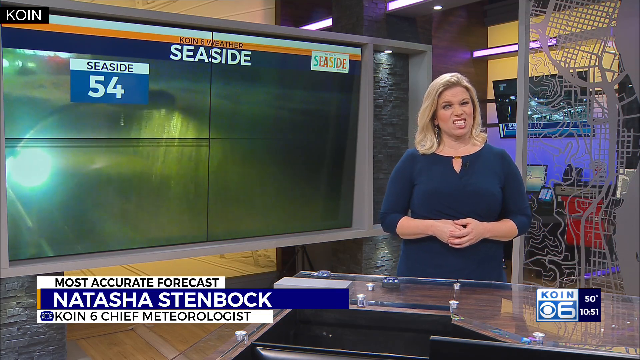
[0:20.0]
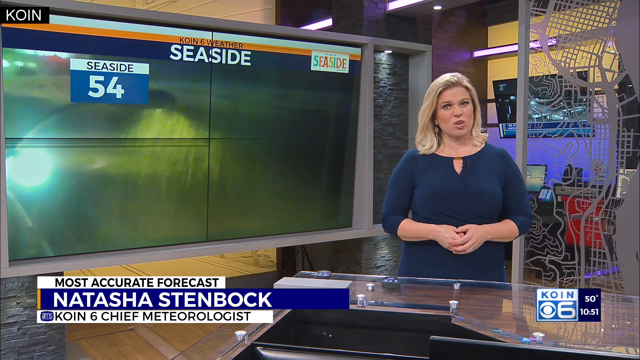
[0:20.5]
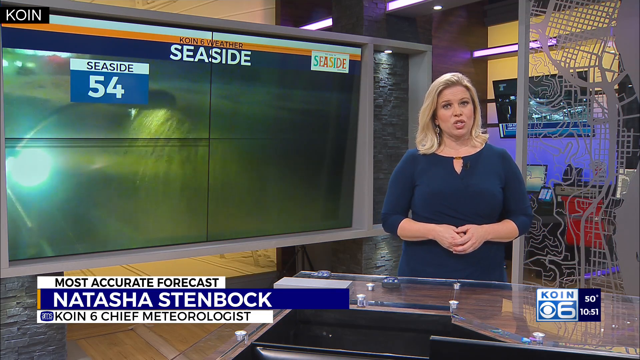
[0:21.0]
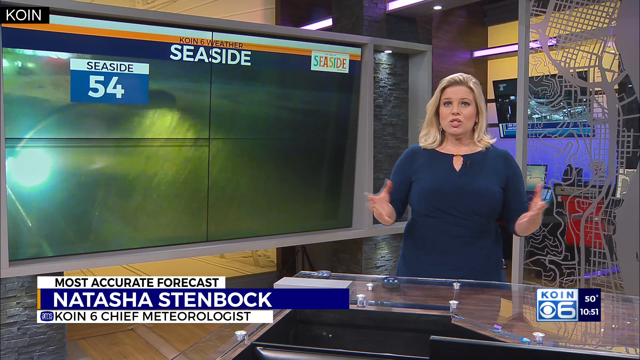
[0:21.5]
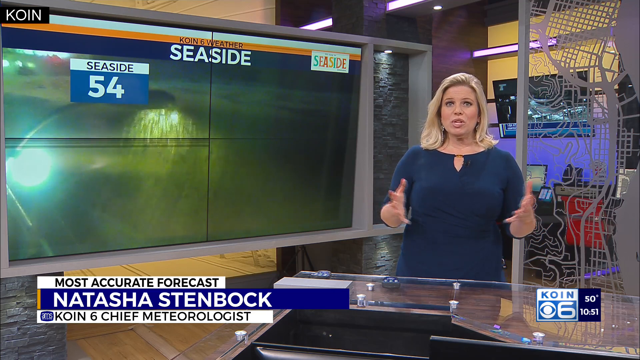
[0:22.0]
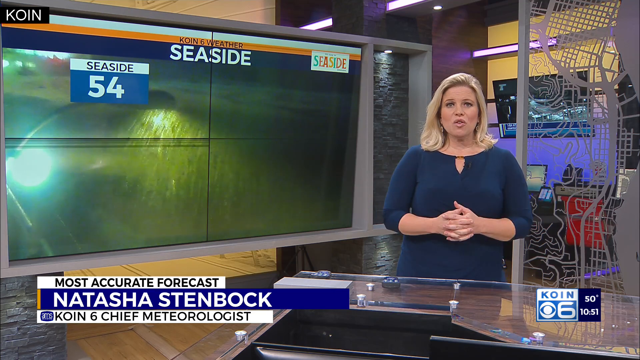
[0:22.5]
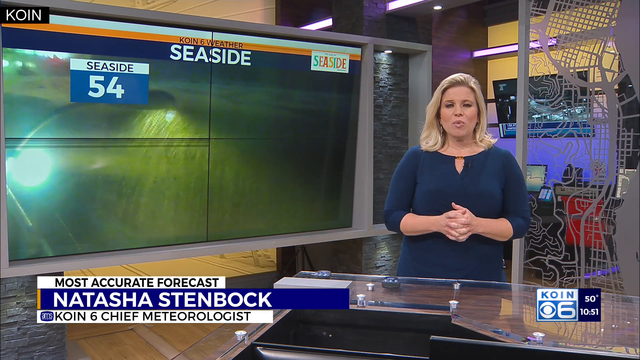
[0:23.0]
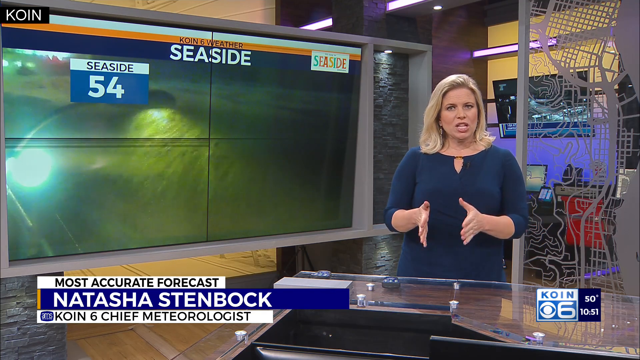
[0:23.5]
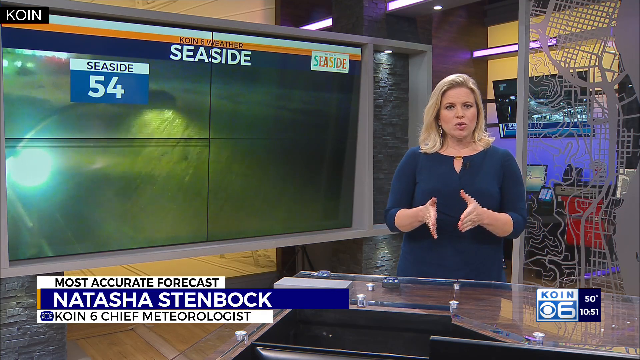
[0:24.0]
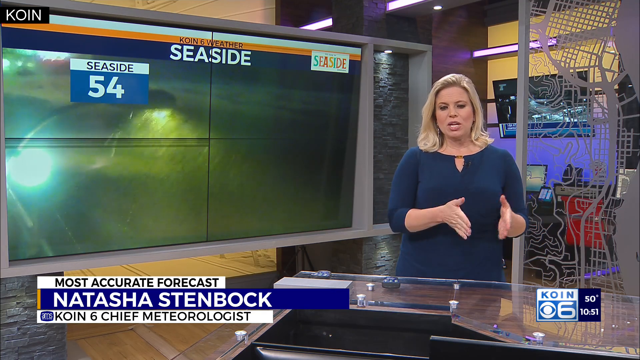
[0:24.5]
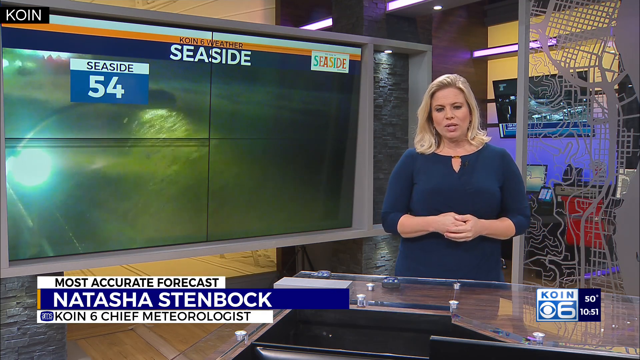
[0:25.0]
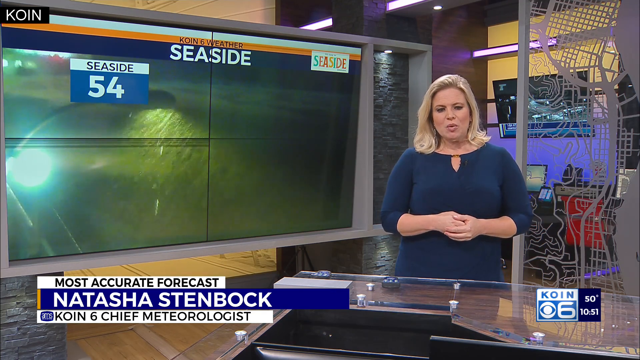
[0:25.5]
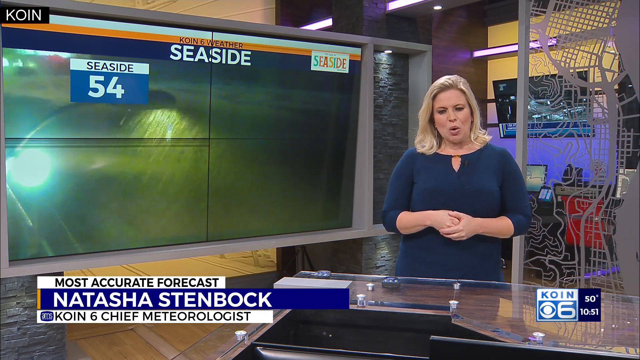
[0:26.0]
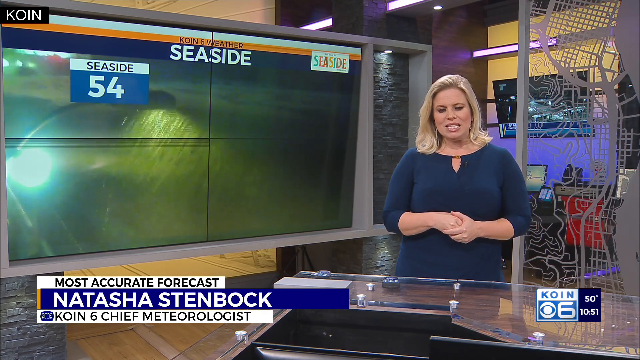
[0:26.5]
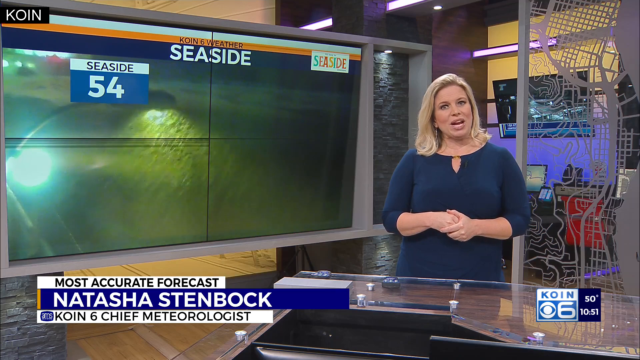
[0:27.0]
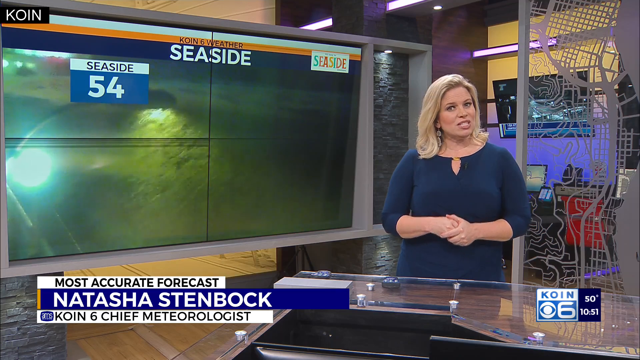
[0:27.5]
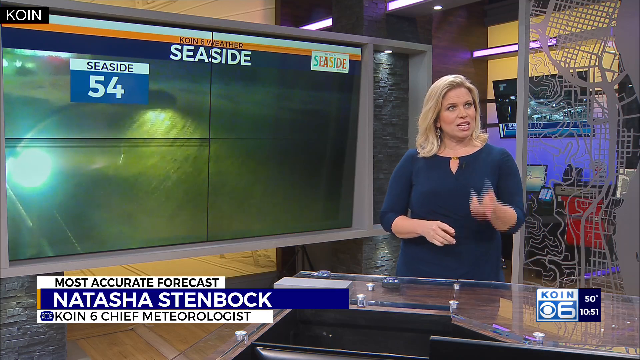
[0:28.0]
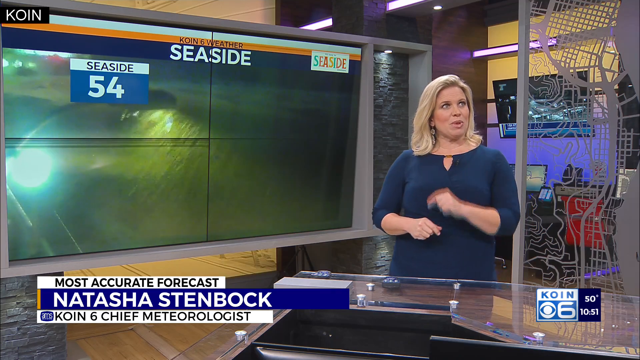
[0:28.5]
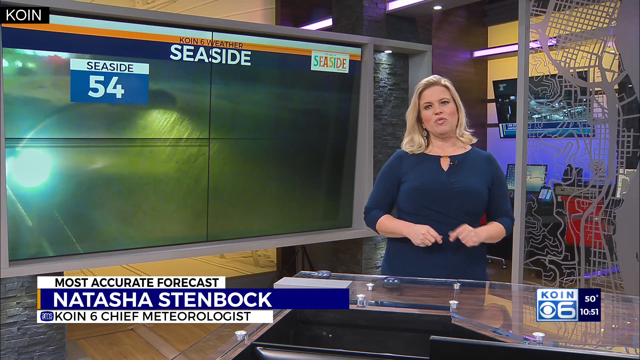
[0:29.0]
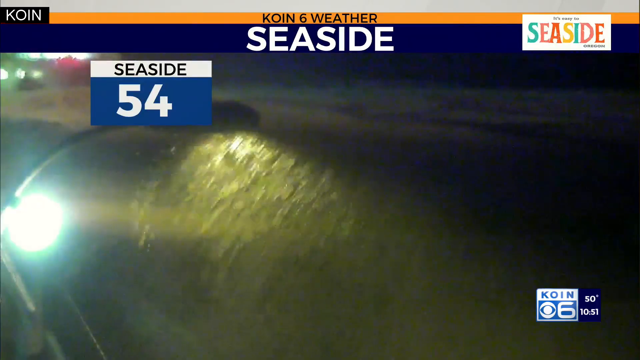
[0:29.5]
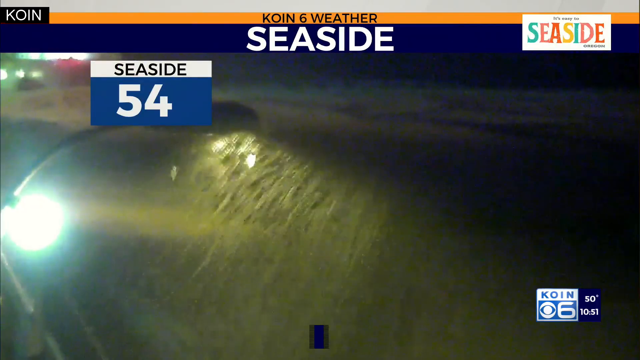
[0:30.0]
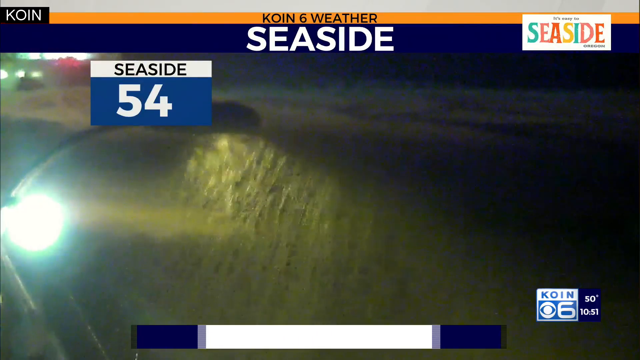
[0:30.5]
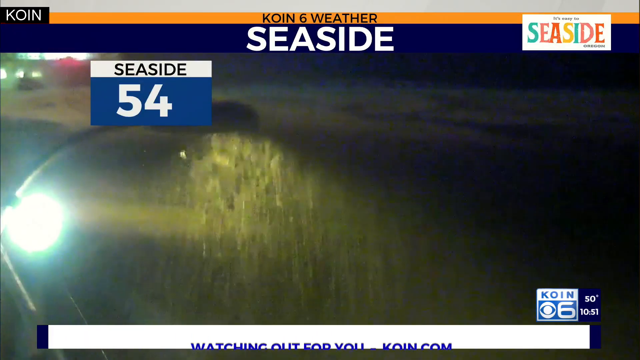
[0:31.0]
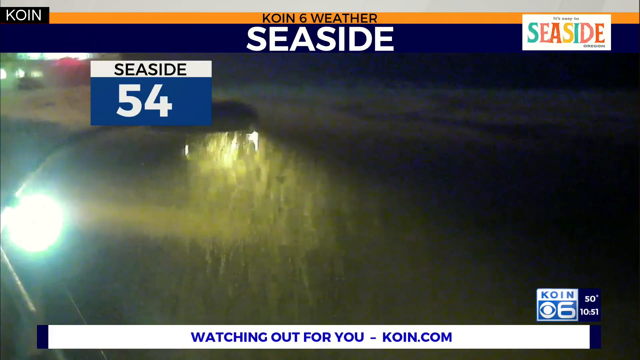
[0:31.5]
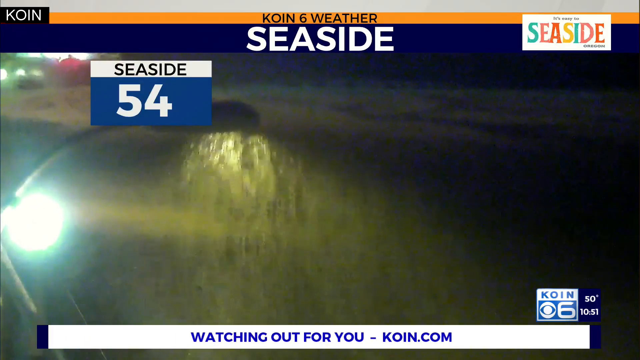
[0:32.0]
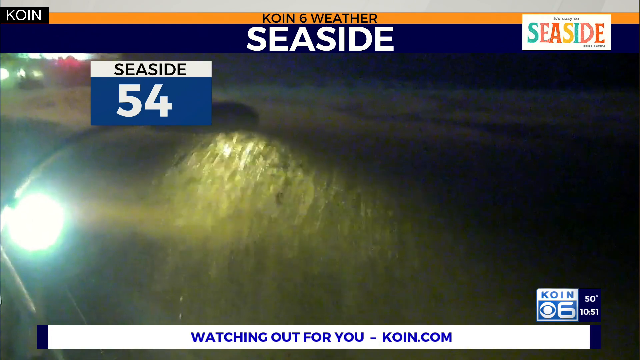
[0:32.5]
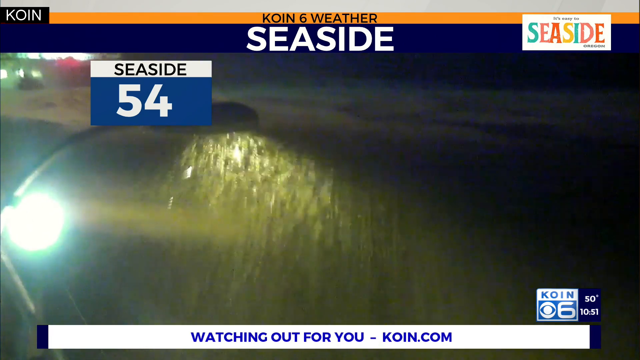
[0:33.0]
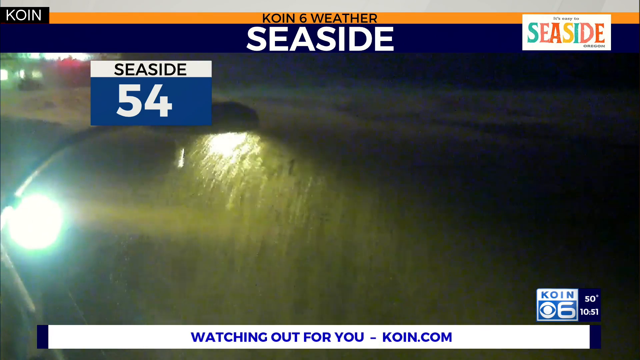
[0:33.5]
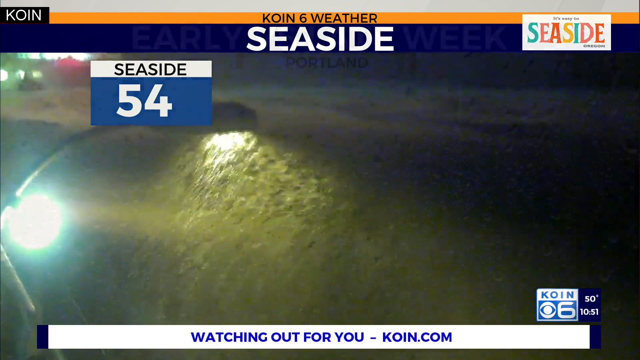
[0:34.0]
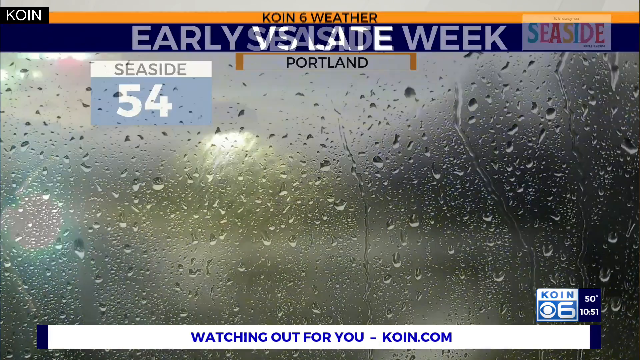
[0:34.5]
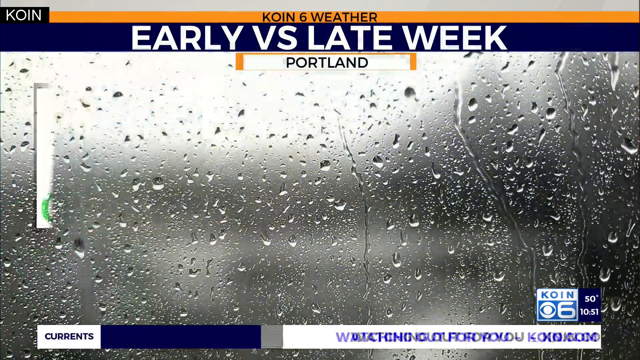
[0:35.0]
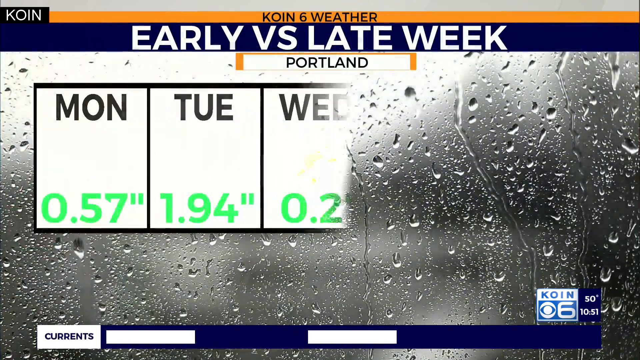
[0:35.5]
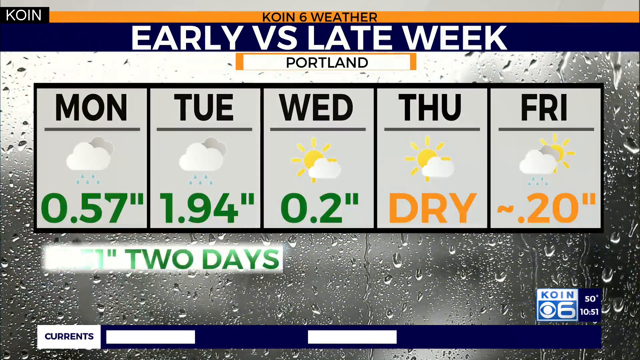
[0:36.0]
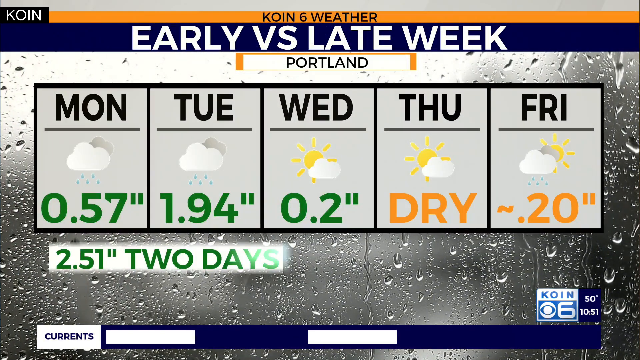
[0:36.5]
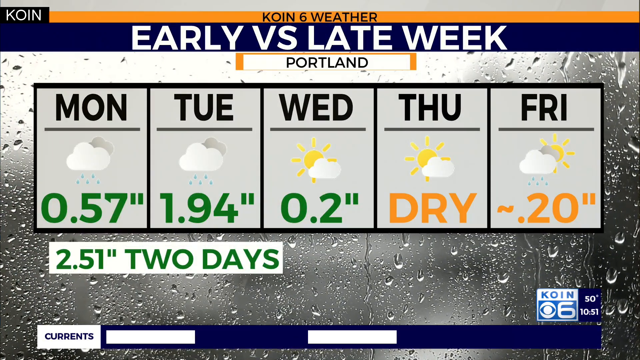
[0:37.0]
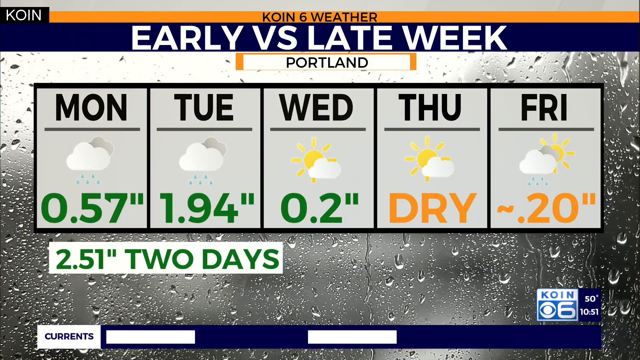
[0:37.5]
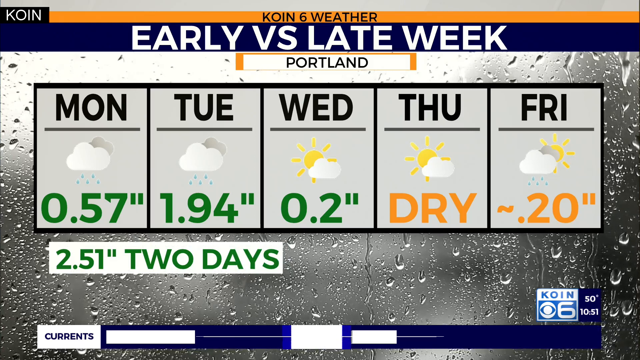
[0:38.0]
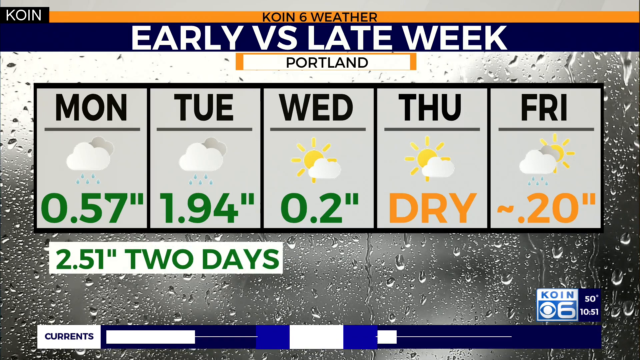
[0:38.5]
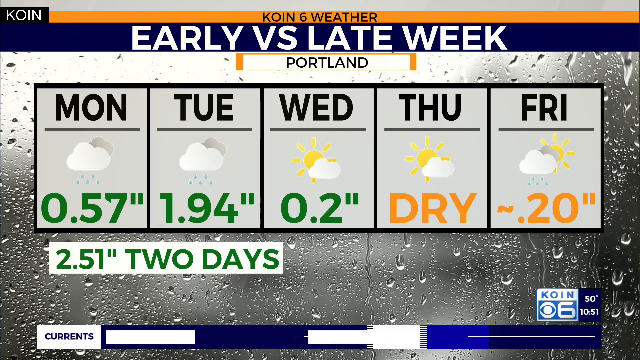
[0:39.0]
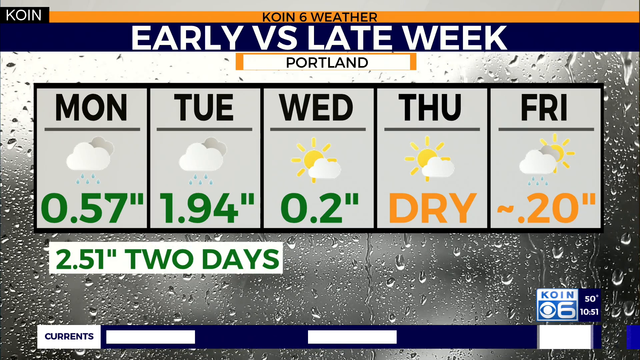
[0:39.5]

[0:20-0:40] She keeps speaking and gestures expressively with her hands. On-screen readings show 50 degrees and 10:51 p.m., along with Seaside. A forecast for the Portland area lists Monday through Friday: 0.57 of rain for Monday, 1.94 for Tuesday, 0.2 for Wednesday, dry for Thursday and approximately 0.20 for Friday, with most of the rain at the beginning of the week. In the background, rain is shown on a glass window or a screen of some kind.